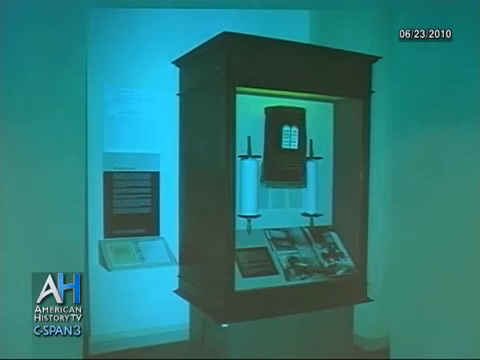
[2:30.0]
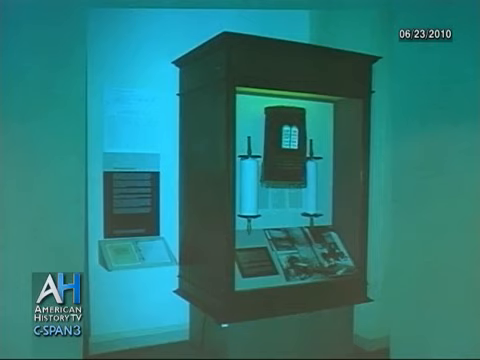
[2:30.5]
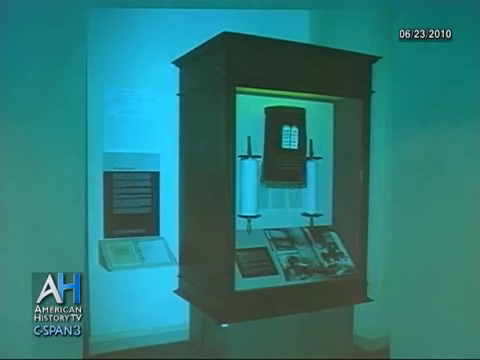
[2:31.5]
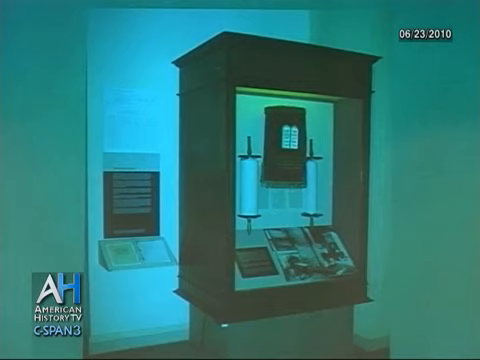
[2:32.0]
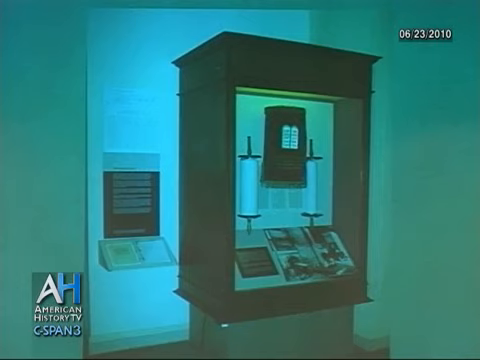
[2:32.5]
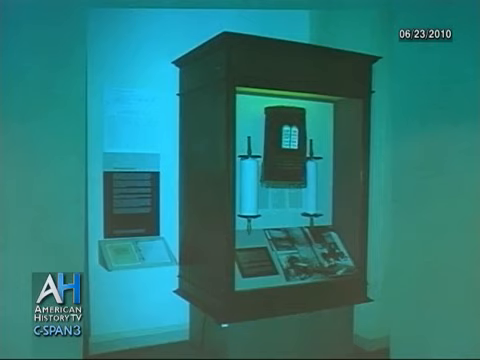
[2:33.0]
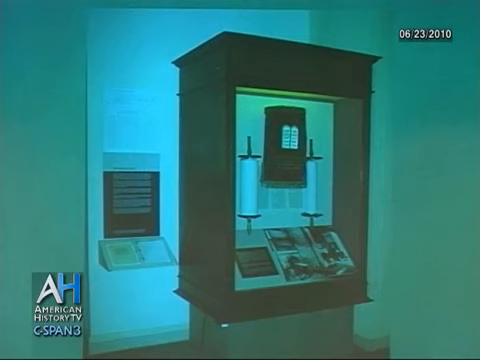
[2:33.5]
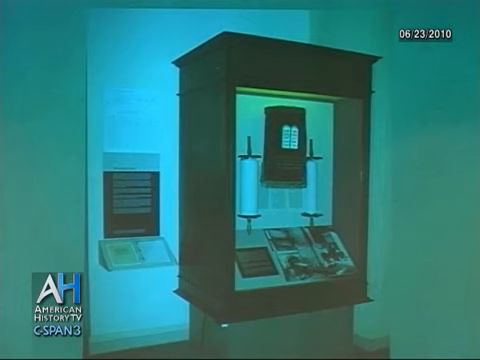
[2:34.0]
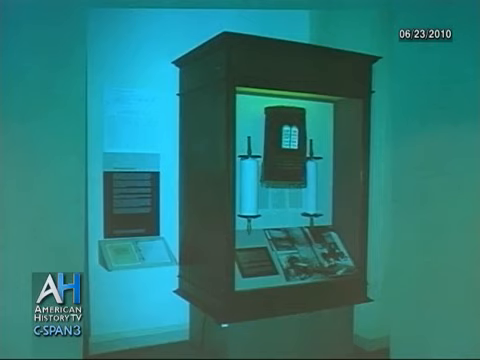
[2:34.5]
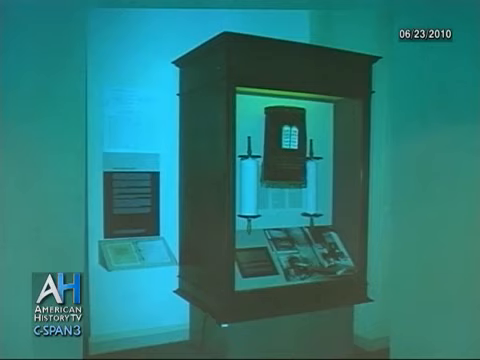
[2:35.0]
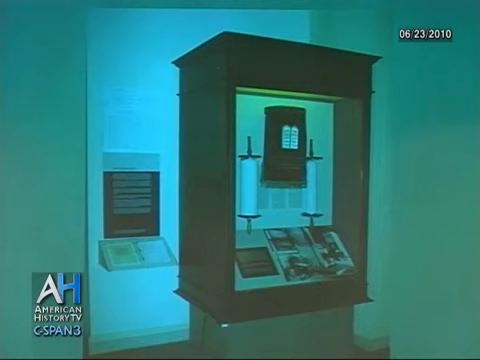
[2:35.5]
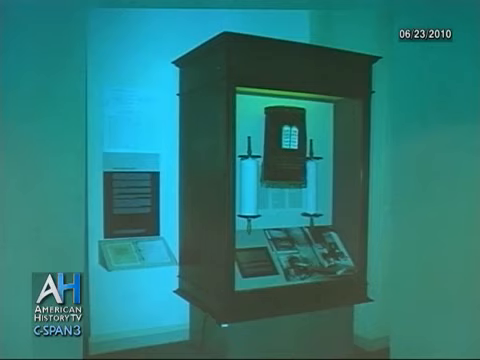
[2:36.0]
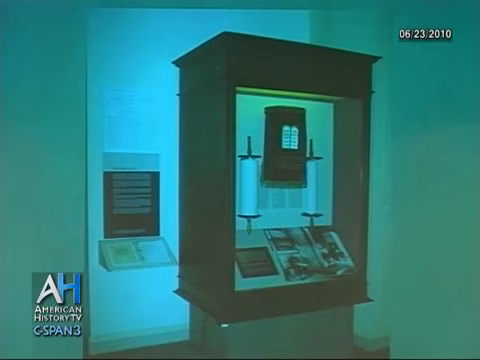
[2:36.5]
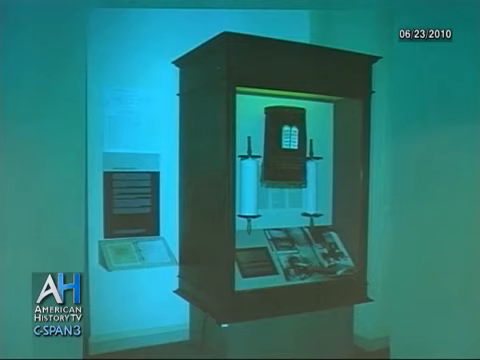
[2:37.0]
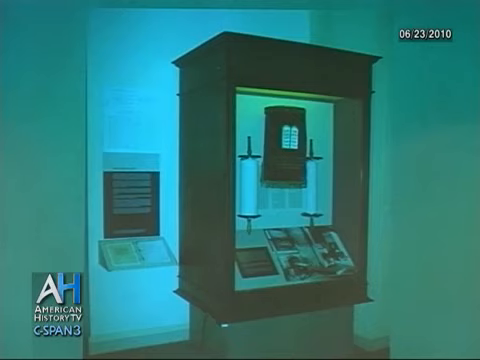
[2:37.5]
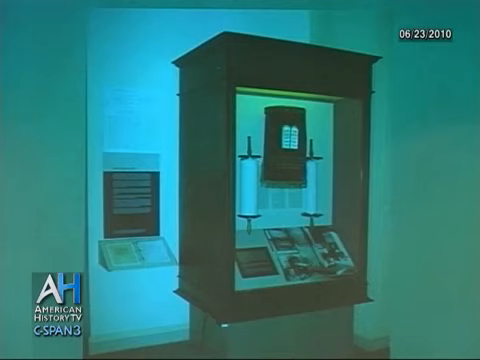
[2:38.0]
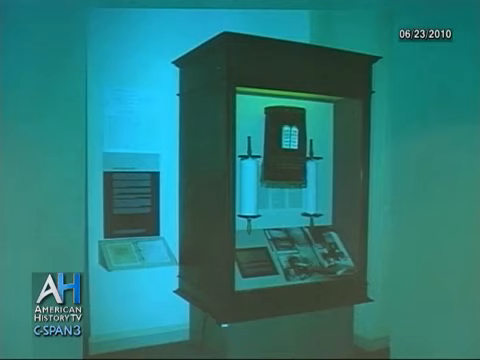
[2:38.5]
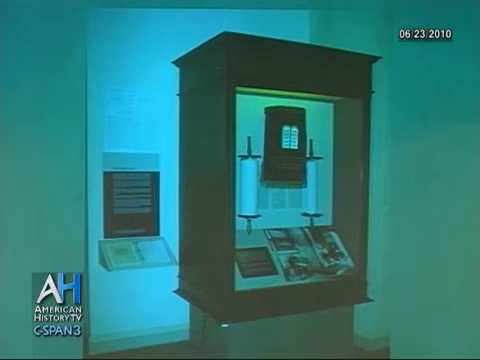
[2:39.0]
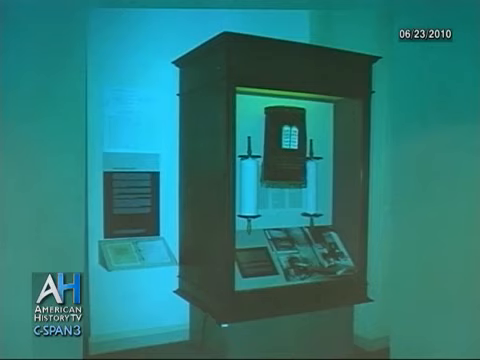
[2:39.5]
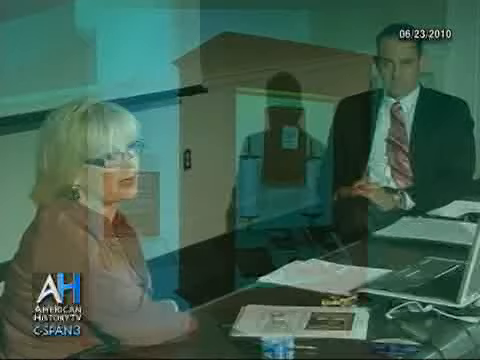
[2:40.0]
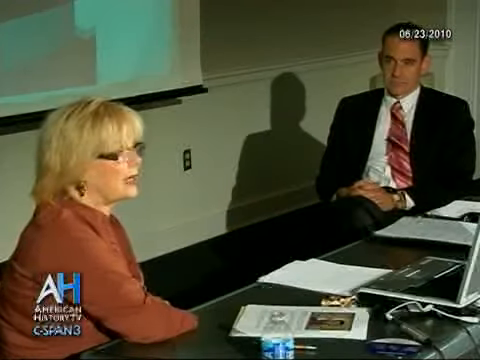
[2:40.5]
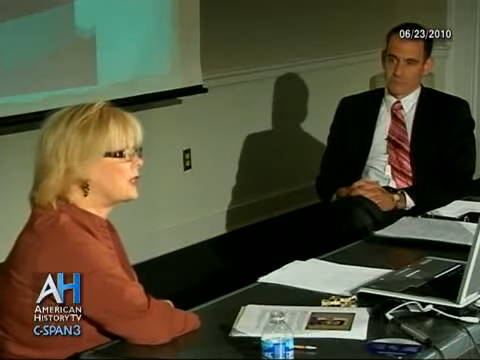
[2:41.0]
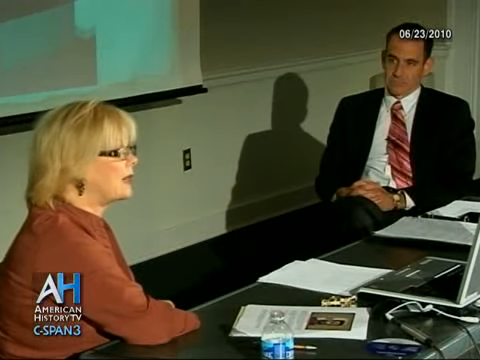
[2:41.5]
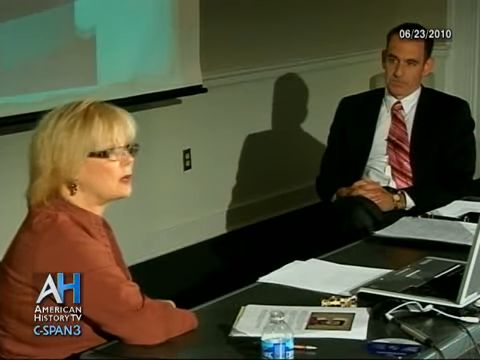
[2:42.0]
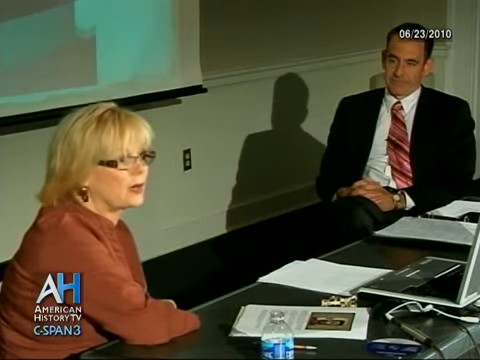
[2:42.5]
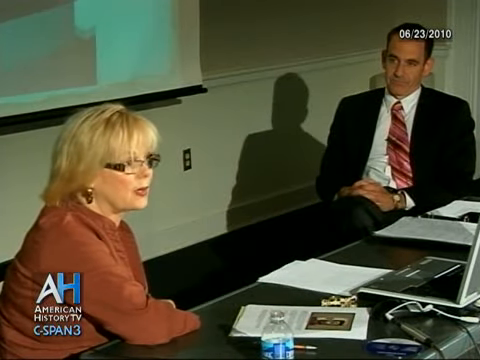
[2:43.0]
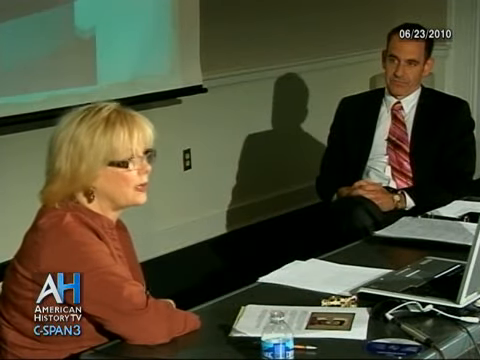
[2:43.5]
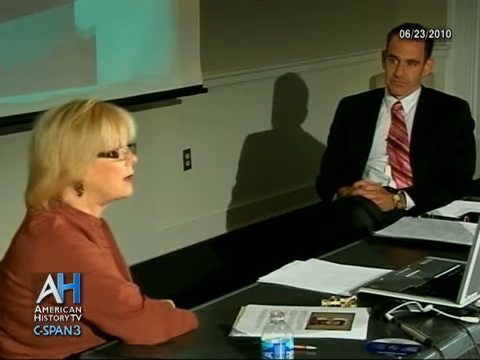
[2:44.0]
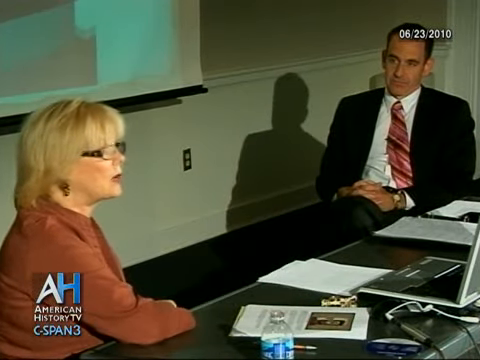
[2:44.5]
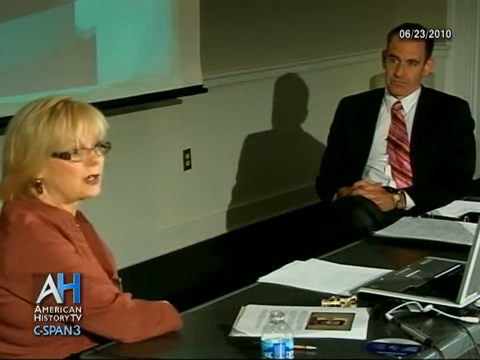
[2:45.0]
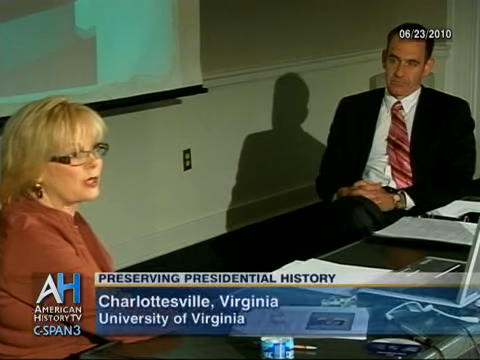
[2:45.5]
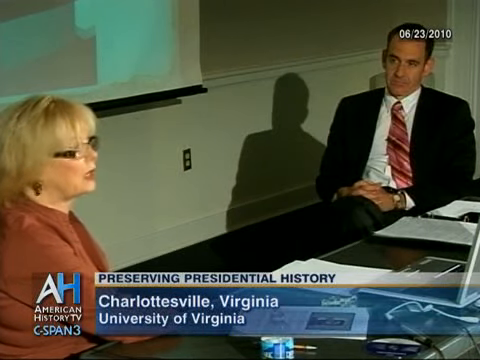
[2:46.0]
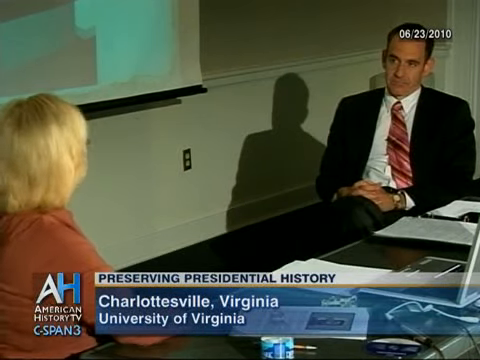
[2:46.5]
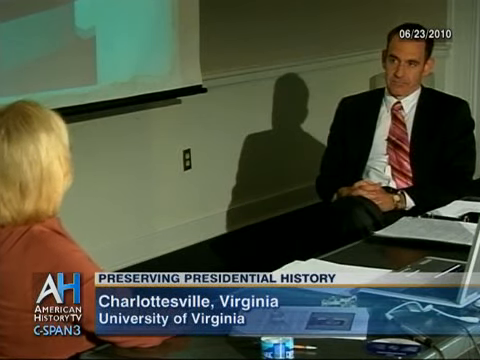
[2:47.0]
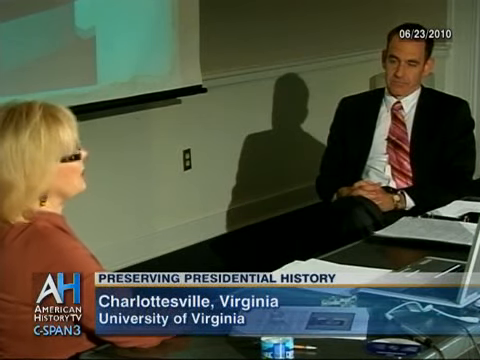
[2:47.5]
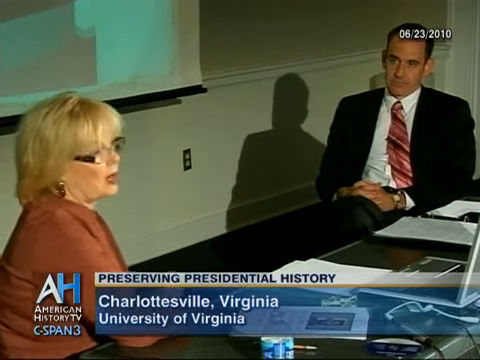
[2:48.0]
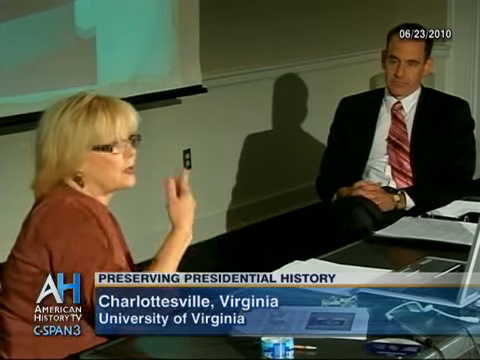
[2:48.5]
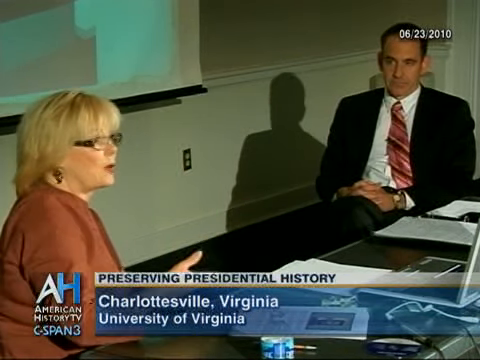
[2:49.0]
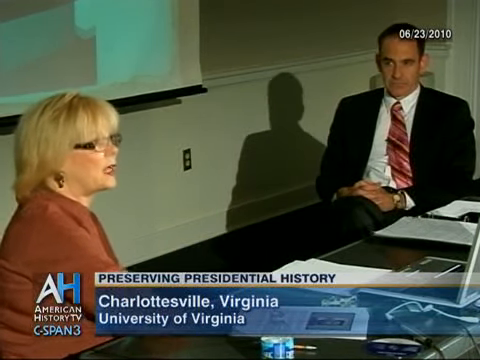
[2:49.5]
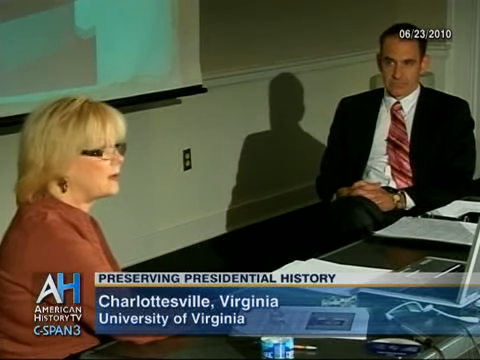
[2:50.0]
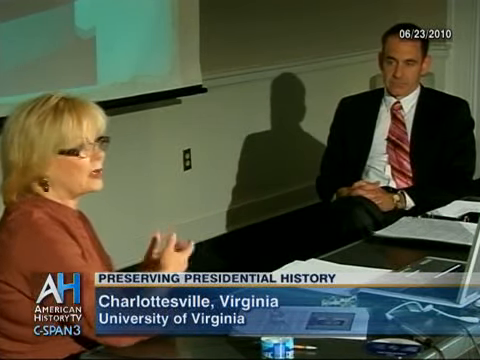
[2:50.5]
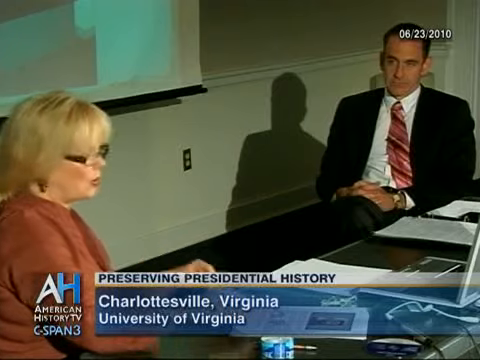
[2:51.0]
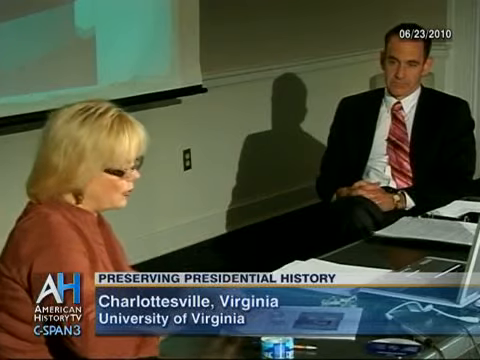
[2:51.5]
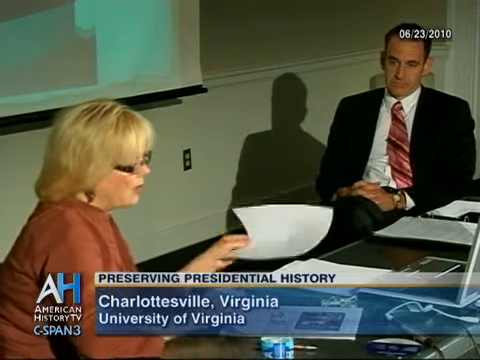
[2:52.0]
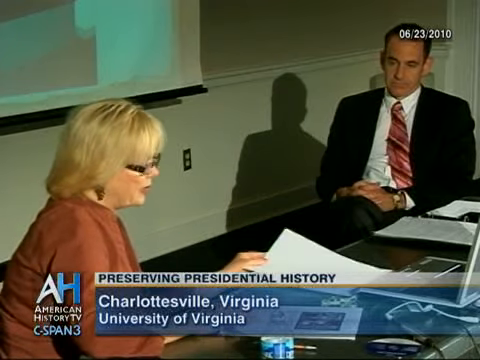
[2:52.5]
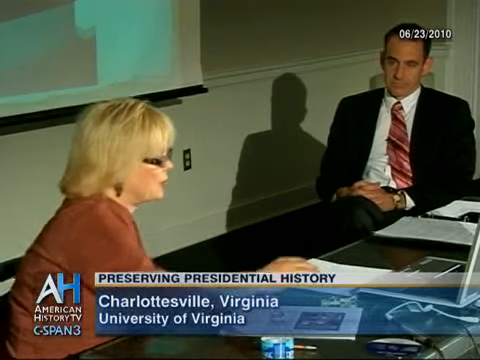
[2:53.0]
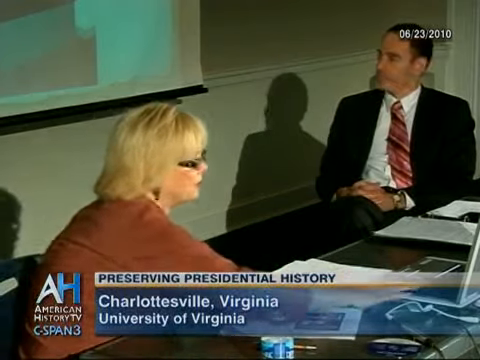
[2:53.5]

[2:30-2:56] The image of what is apparently a museum display continues: the wooden box, which is taller than it is wide and possibly on a pedestal that goes all the way to the floor, though that cannot be seen. Behind it there seems to be a different display, kind of against white, maybe against glass; it is hard to tell what it is, possibly papers, and maybe a plaque sticking up with some lettering that cannot be seen well. The video then fades back to the original two-shot of the woman and the man. She is still talking, looking toward the audience and leaning forward a little, then turns her head to the left to look at the slideshow screen in the back. She reaches her right hand out and kind of swirls it clockwise in front of her, gesturing as she talks, then pulls it back, her elbows resting on the table for a bit. At the very end she reaches forward with her right hand and presses a button on her laptop. The video ends and the screen goes black.